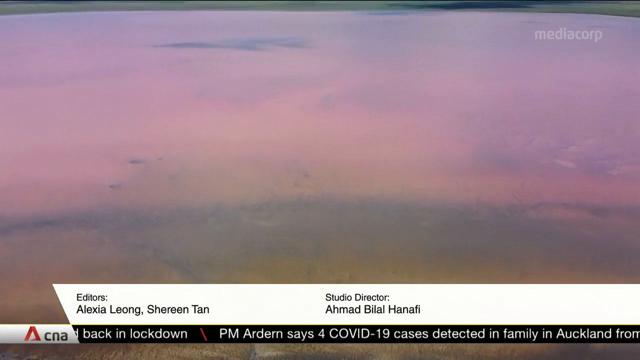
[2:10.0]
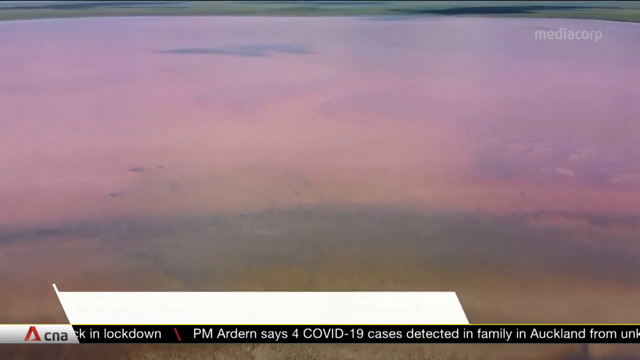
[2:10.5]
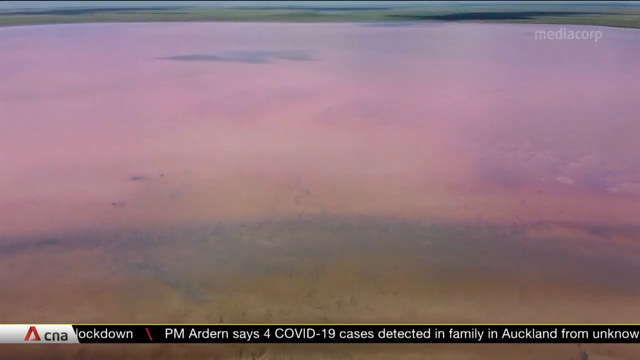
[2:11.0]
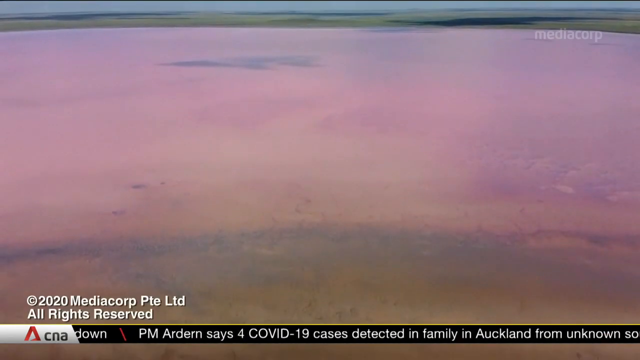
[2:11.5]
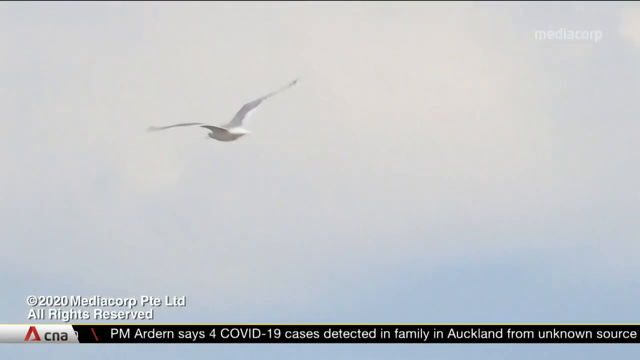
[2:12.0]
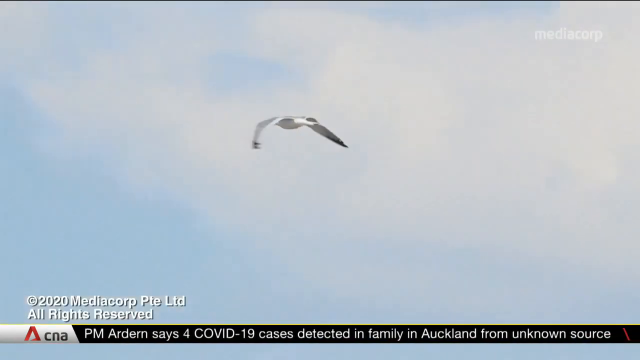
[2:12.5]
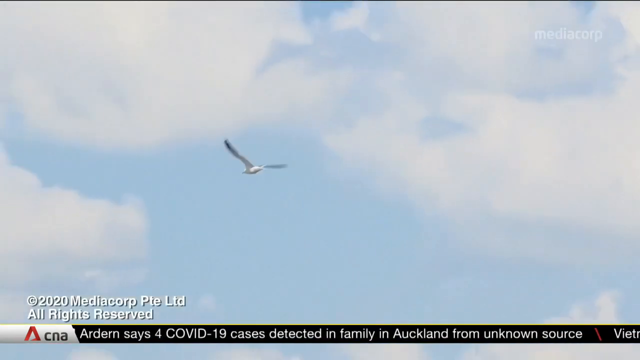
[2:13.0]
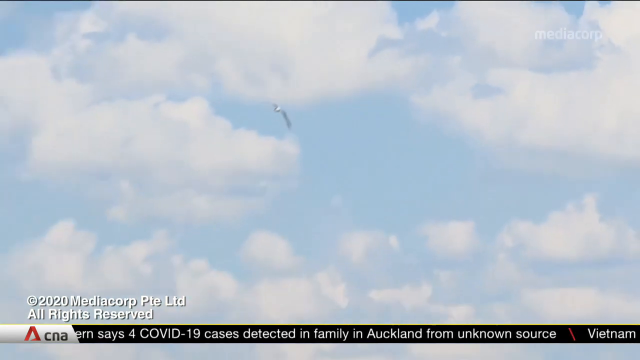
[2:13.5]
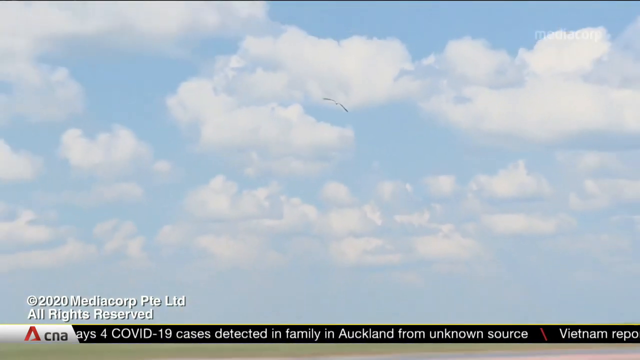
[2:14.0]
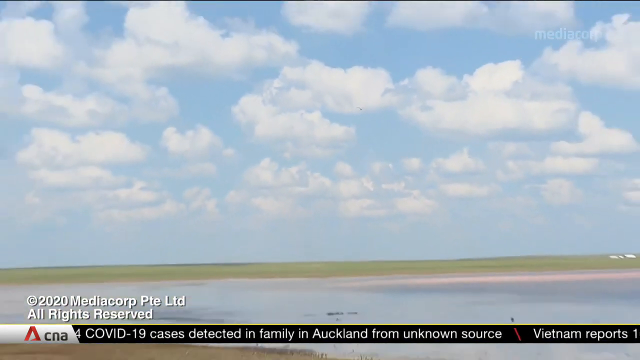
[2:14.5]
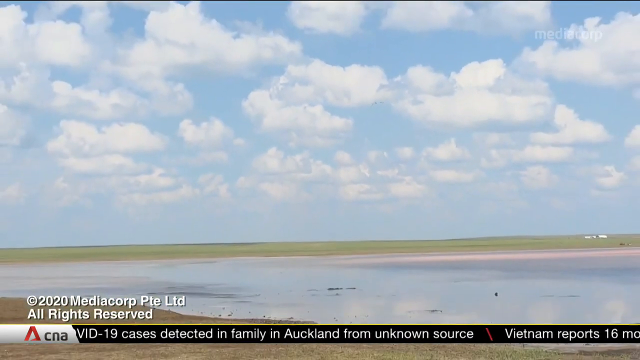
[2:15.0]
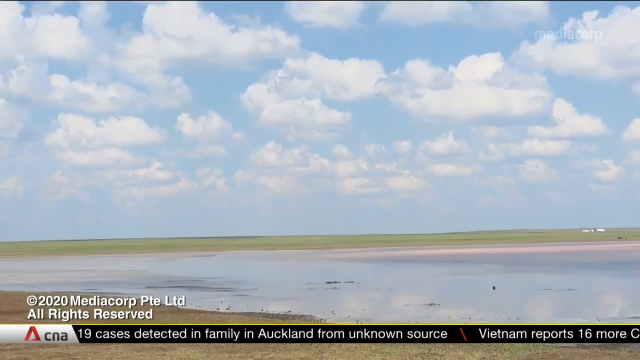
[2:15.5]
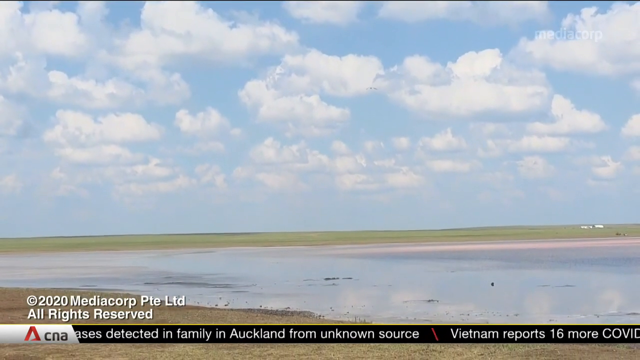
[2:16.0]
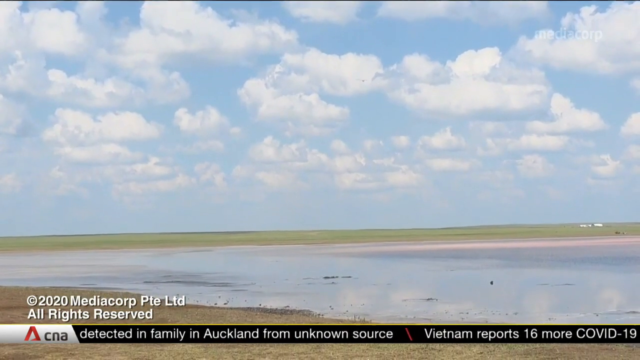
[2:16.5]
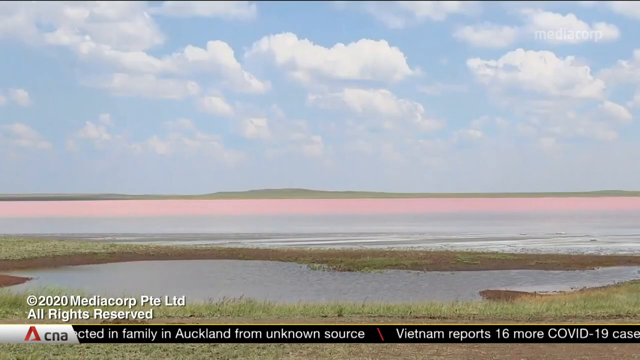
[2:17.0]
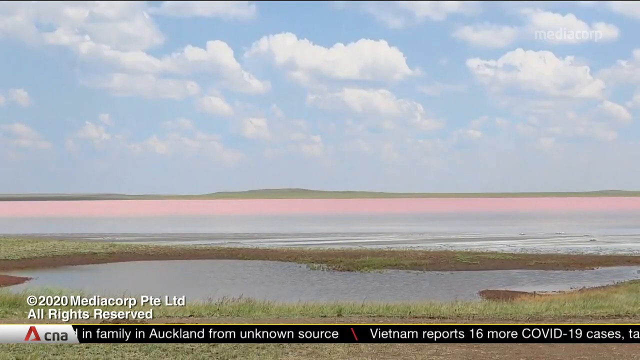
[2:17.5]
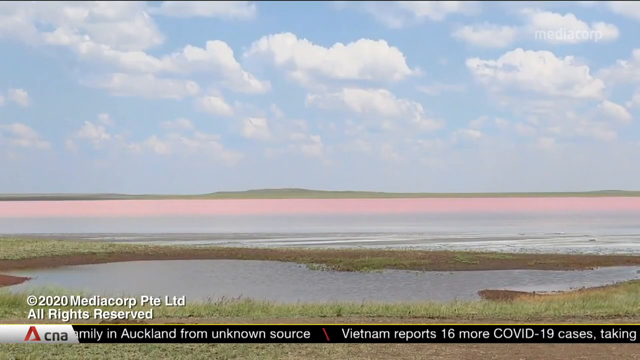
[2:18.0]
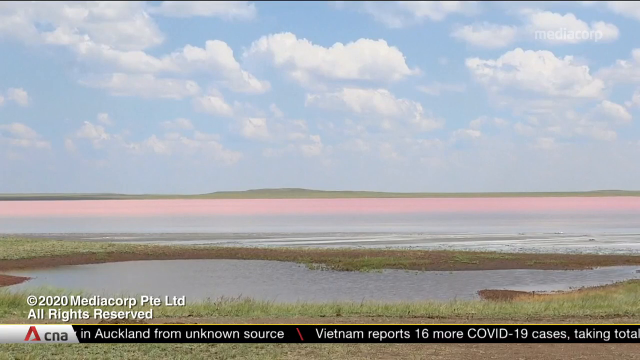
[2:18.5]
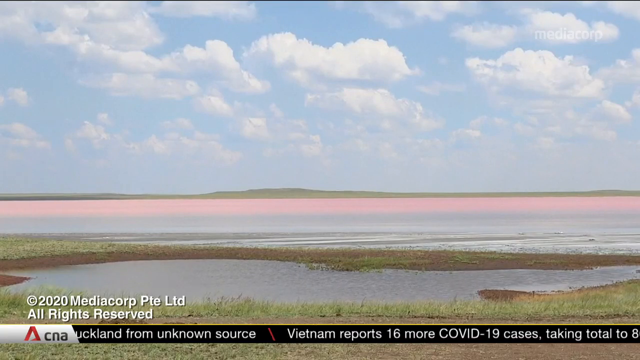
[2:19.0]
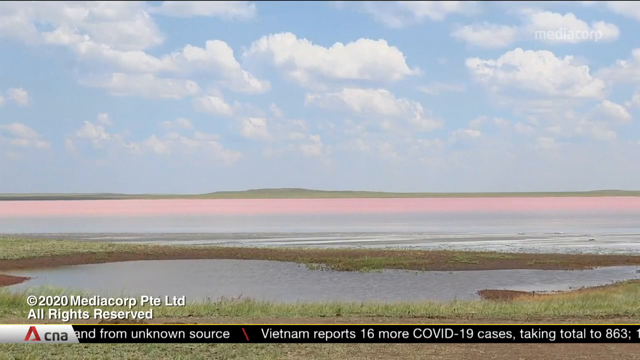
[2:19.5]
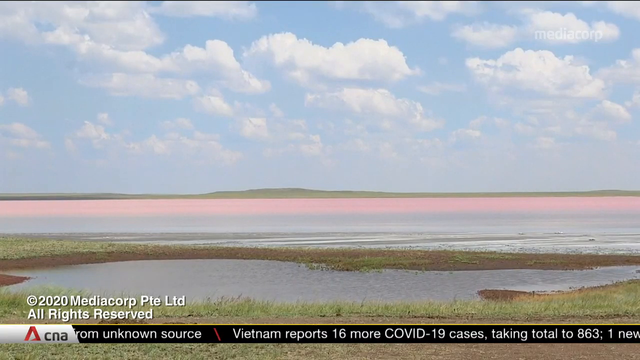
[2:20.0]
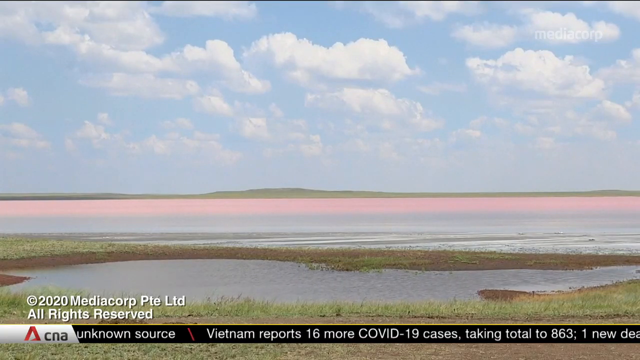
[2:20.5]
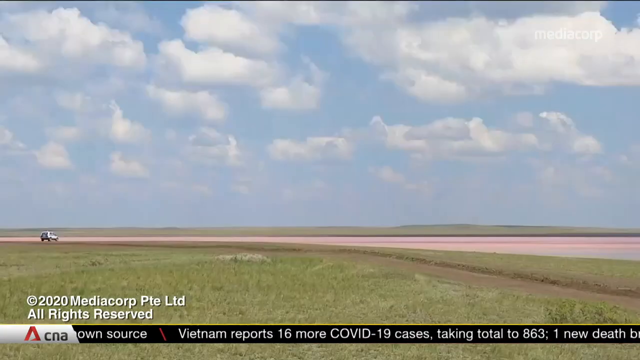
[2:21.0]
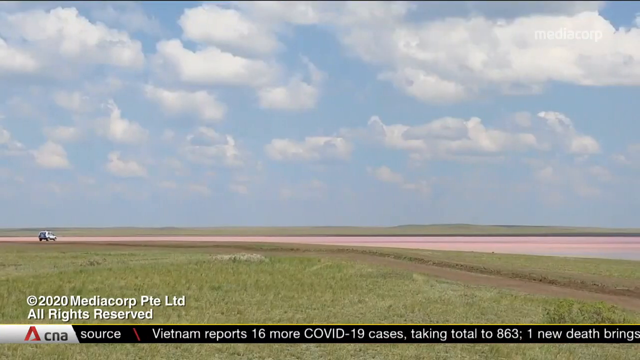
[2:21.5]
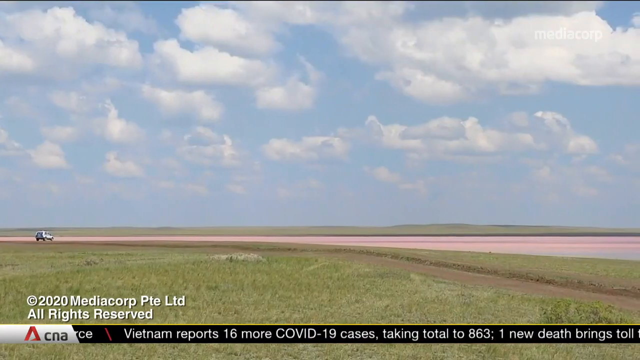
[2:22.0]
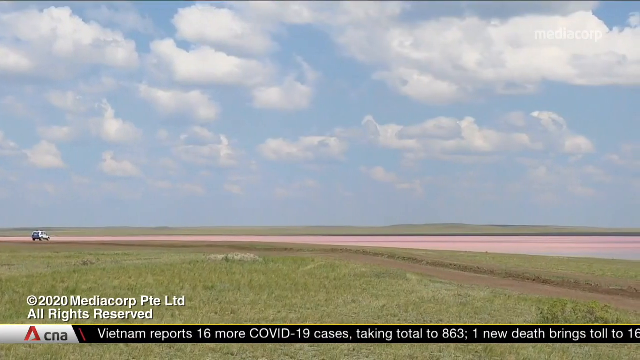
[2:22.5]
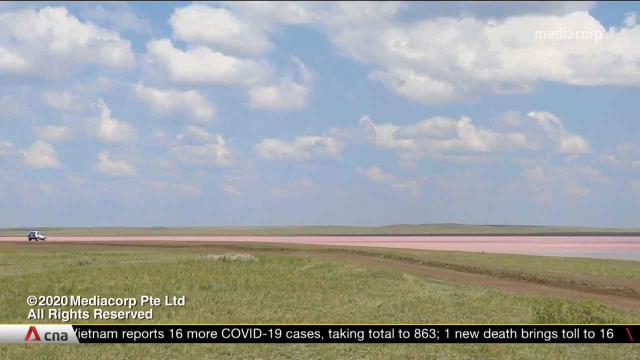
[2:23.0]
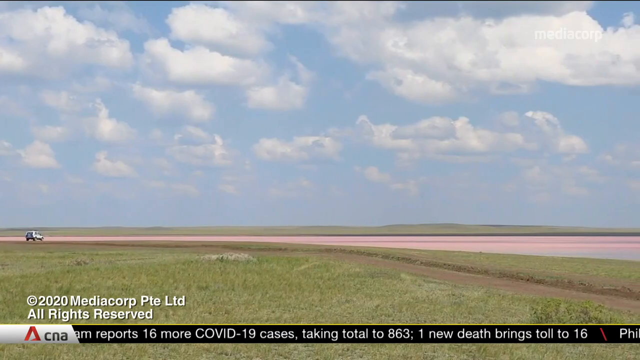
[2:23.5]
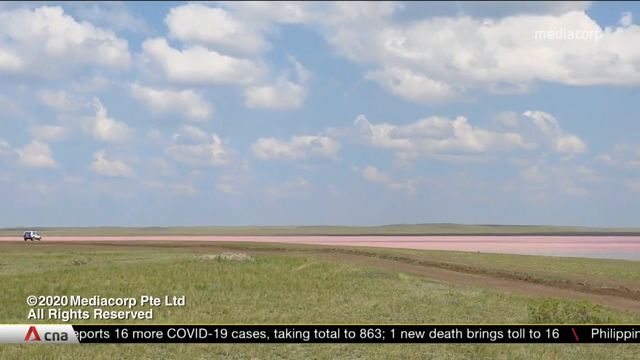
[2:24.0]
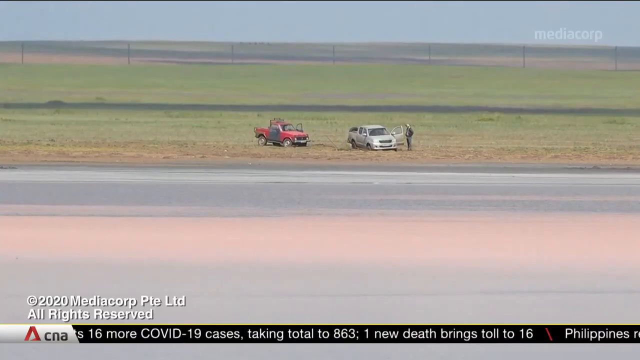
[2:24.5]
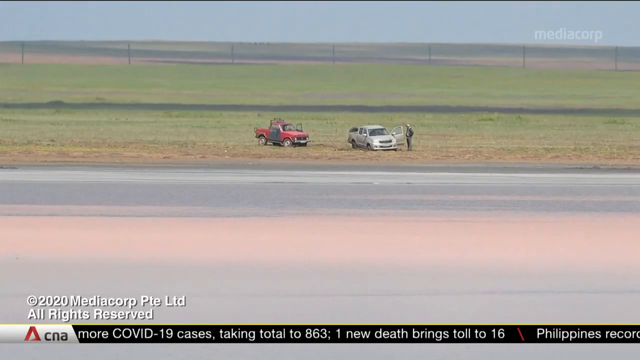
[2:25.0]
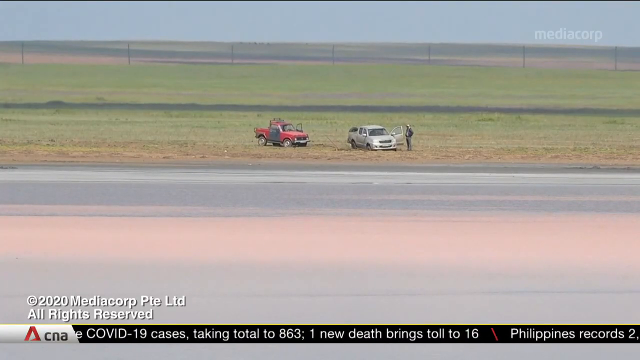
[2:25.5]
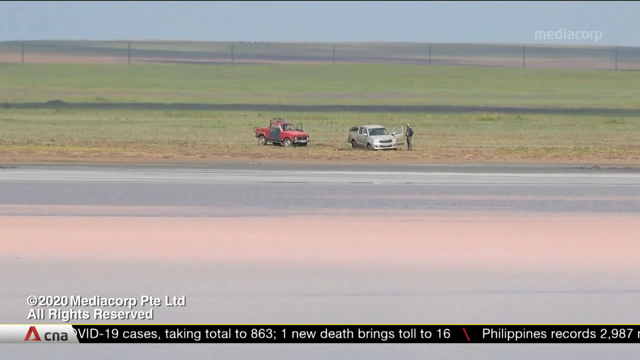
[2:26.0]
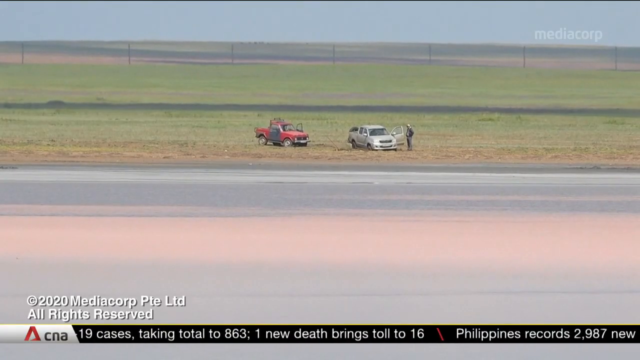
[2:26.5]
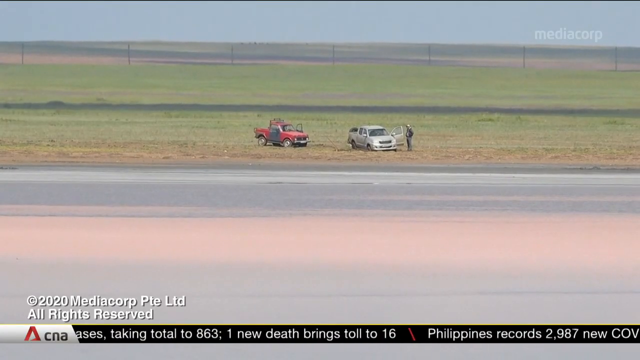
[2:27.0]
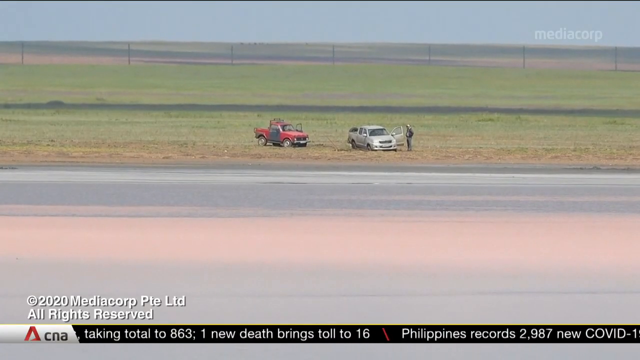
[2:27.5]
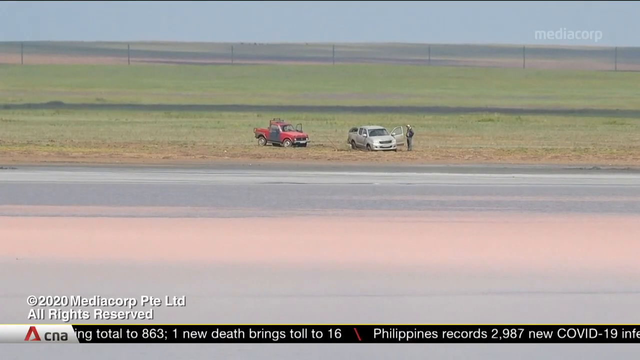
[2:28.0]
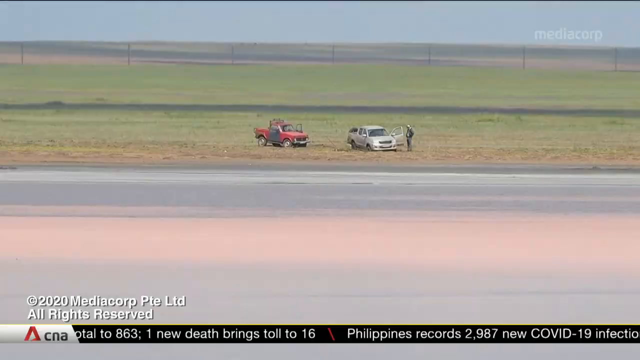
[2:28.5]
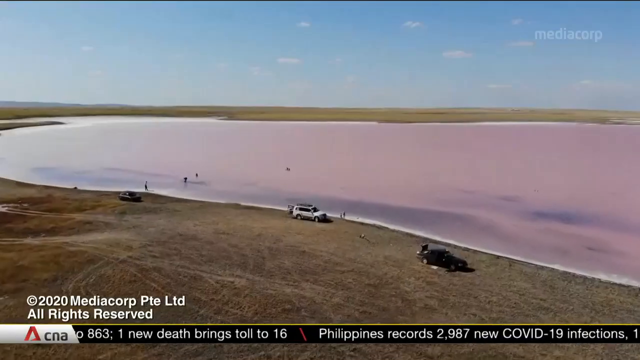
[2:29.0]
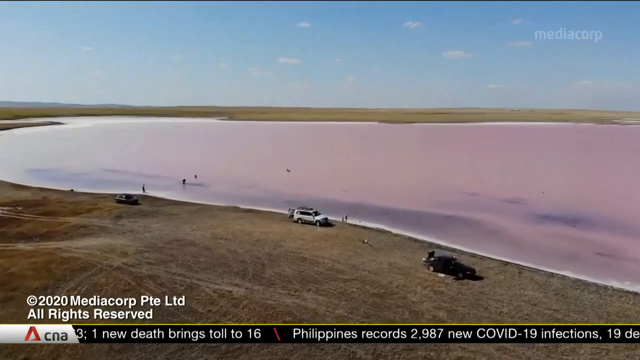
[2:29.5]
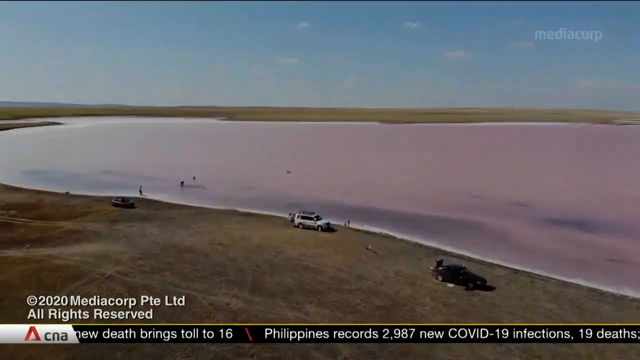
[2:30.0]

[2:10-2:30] A view of the sky shows a large white bird flying under a blue sky with puffy white clouds. In the bottom right corner a copyright notice reads "copyright 2020 Mediacorp PTE Ltd" with "all rights reserved" underneath. The camera pulls away as the bird flies out, and the video then alternates shots of the pink lake from different angles.